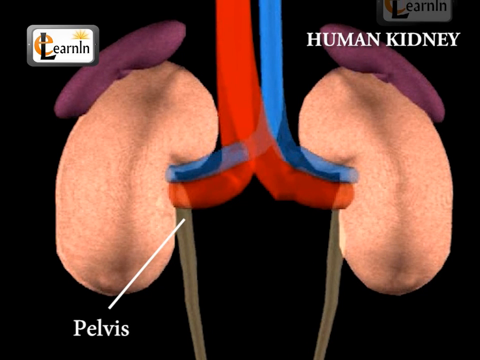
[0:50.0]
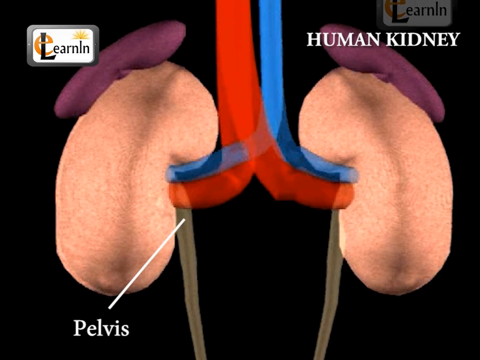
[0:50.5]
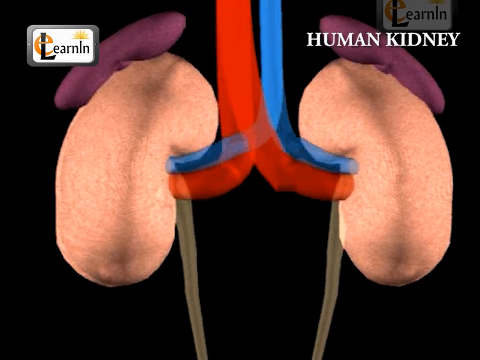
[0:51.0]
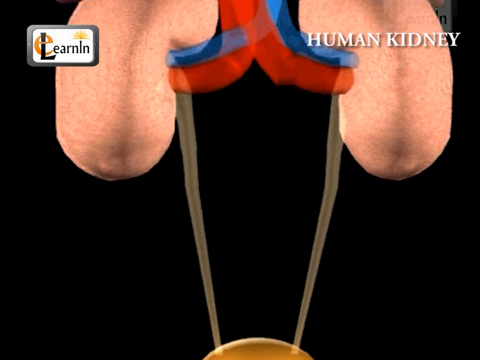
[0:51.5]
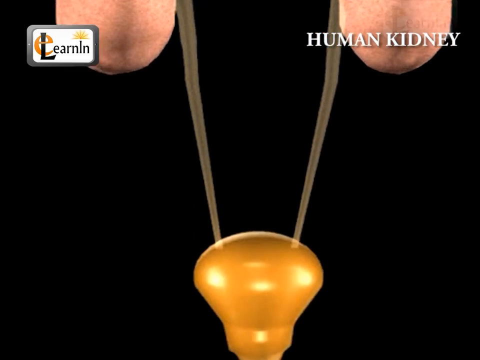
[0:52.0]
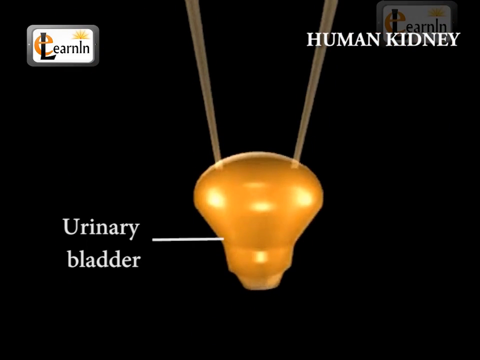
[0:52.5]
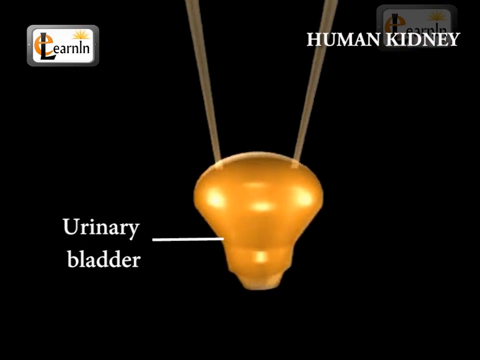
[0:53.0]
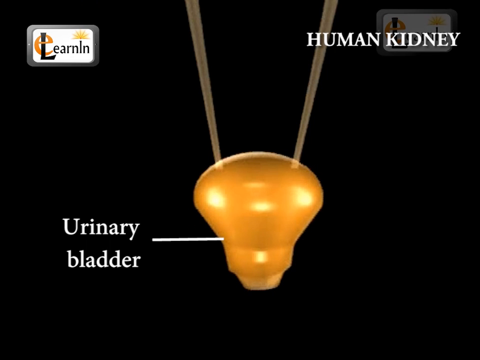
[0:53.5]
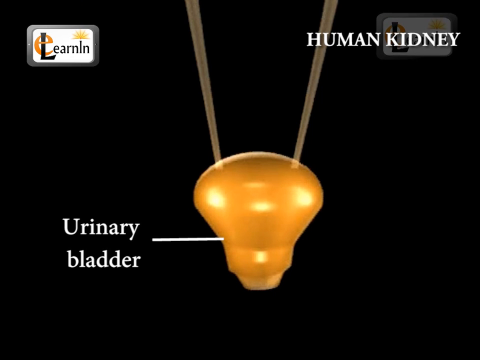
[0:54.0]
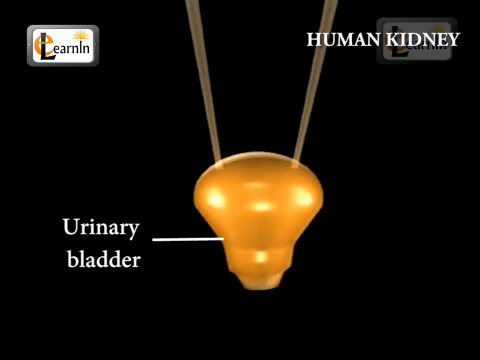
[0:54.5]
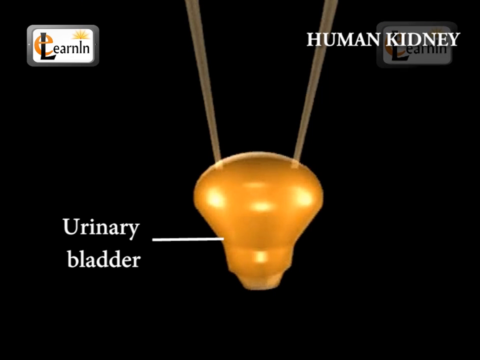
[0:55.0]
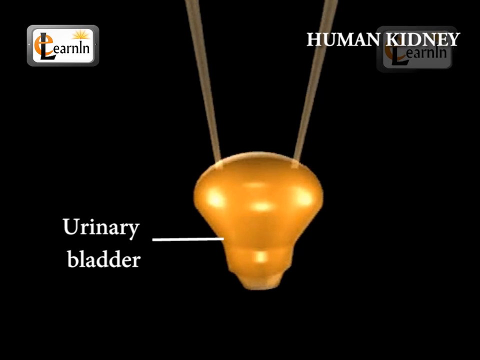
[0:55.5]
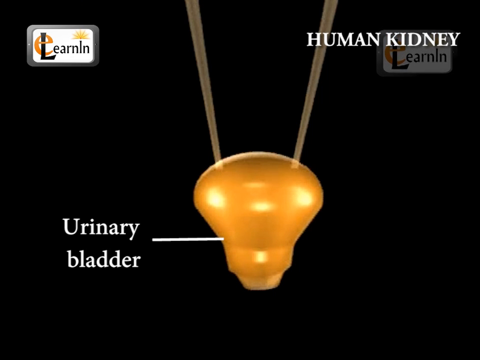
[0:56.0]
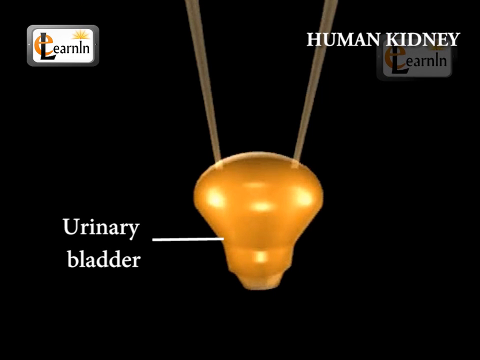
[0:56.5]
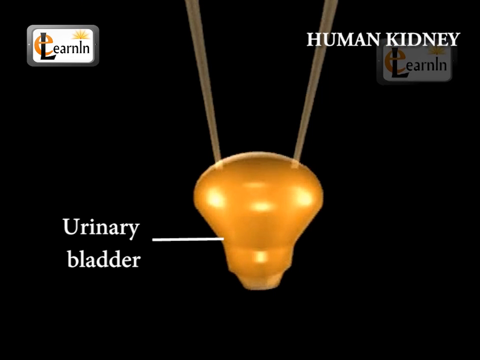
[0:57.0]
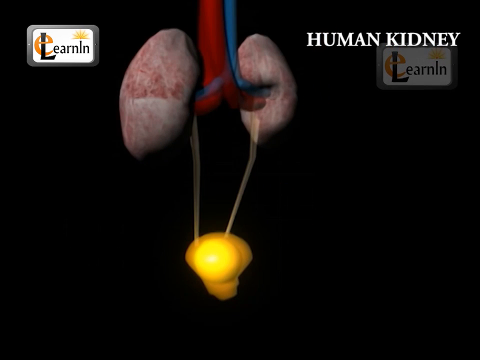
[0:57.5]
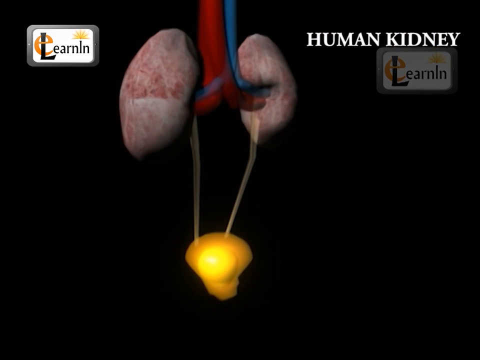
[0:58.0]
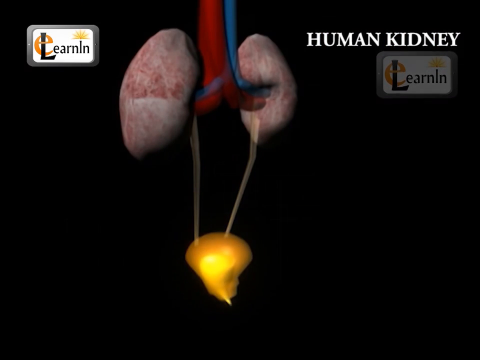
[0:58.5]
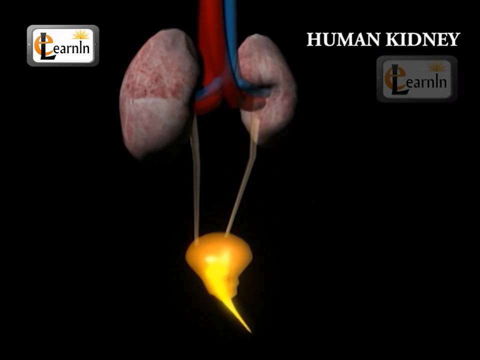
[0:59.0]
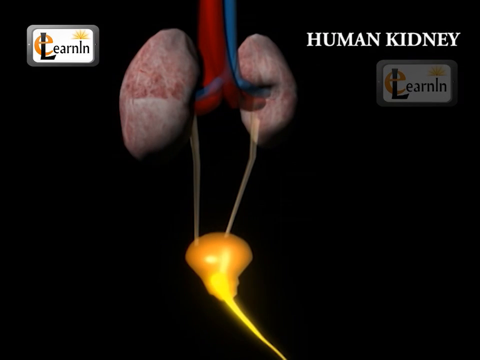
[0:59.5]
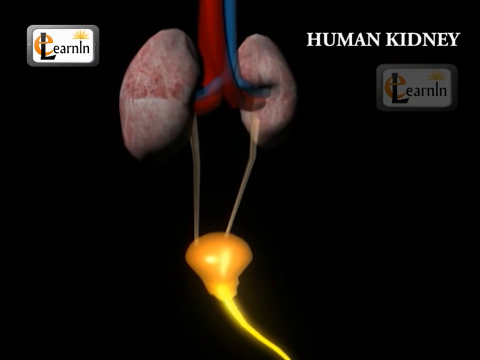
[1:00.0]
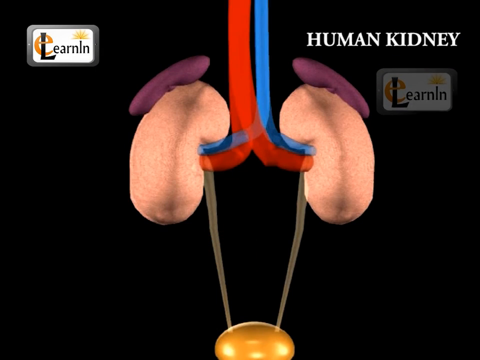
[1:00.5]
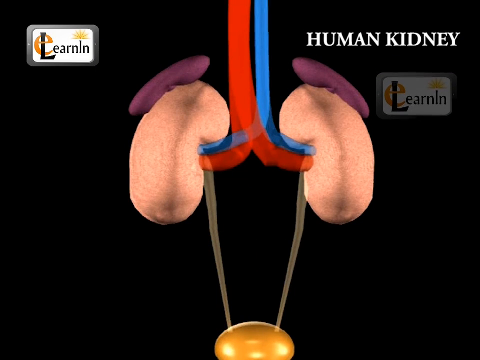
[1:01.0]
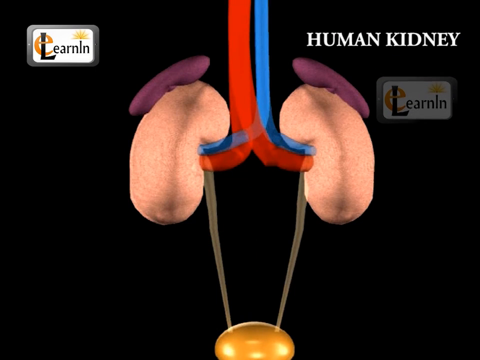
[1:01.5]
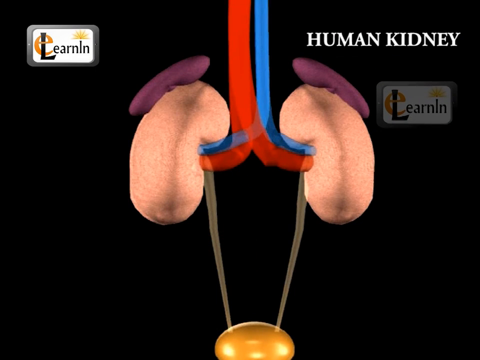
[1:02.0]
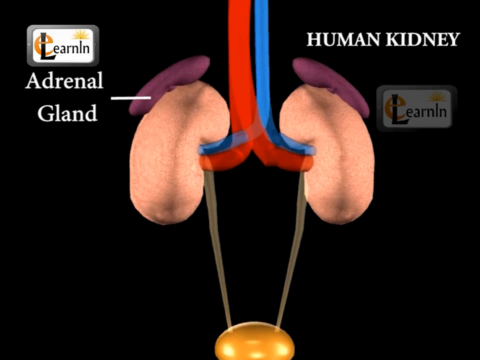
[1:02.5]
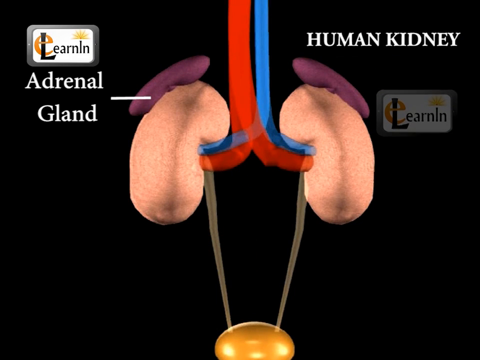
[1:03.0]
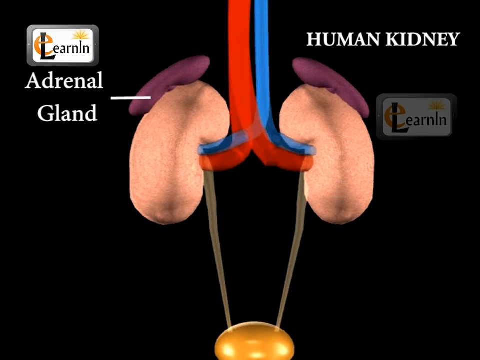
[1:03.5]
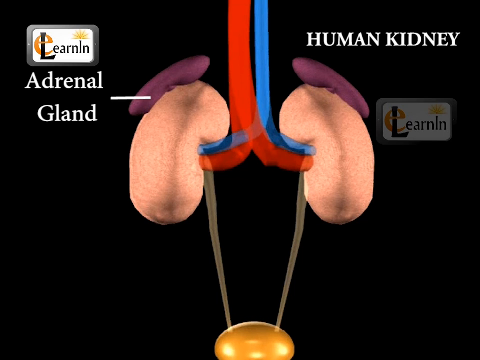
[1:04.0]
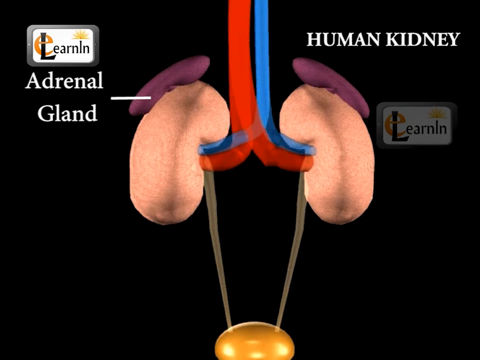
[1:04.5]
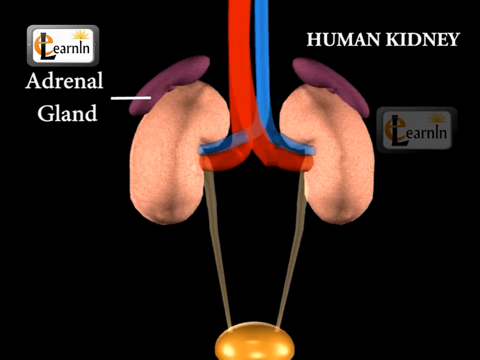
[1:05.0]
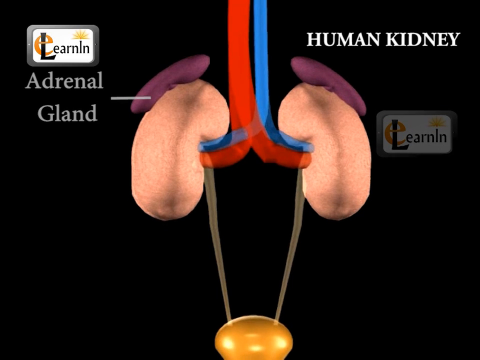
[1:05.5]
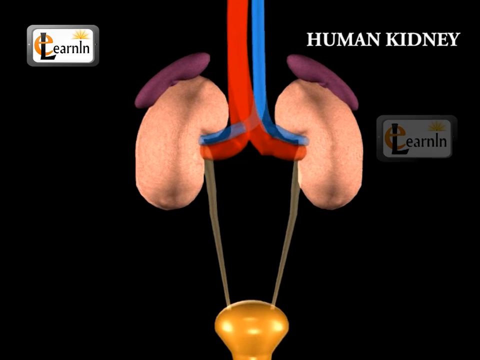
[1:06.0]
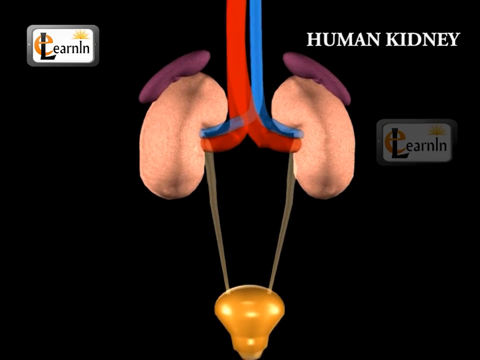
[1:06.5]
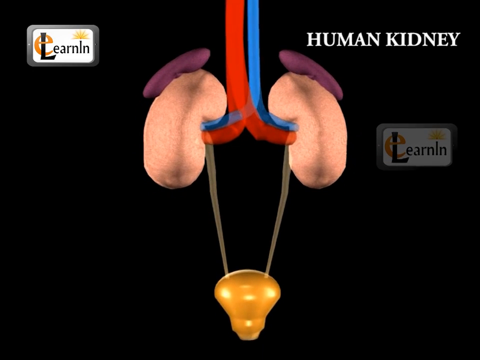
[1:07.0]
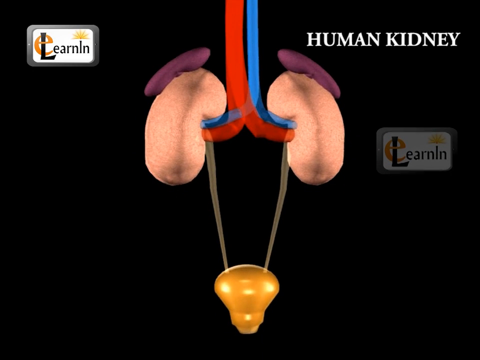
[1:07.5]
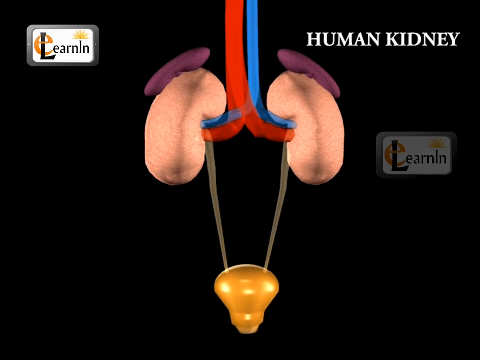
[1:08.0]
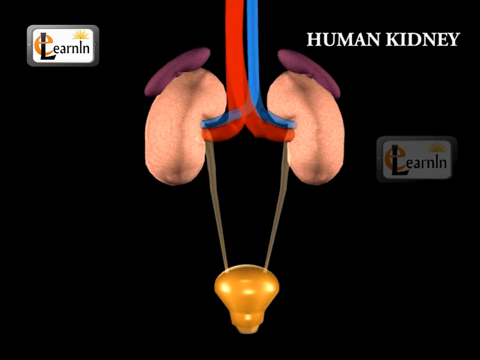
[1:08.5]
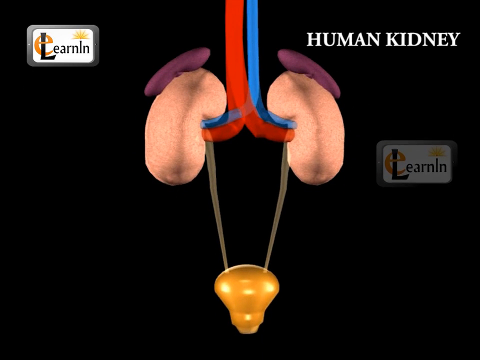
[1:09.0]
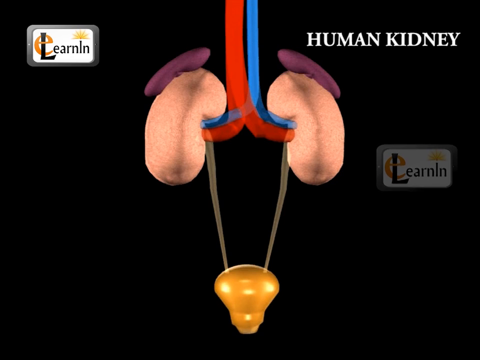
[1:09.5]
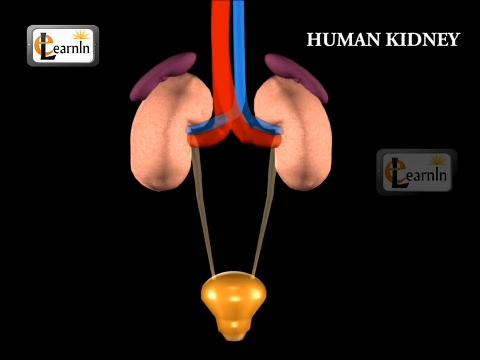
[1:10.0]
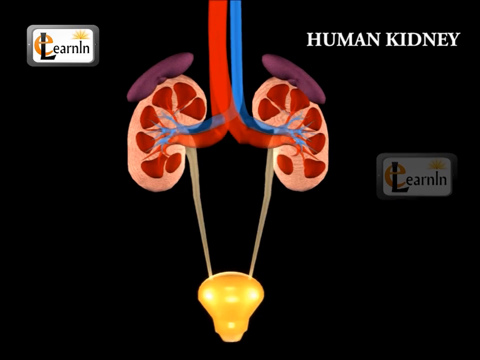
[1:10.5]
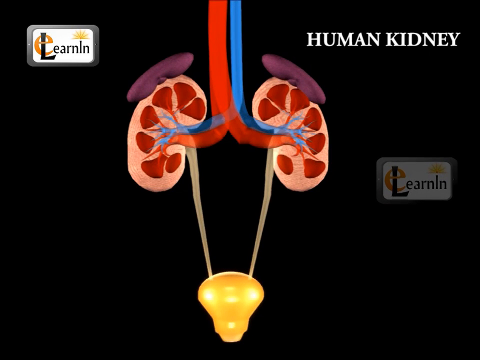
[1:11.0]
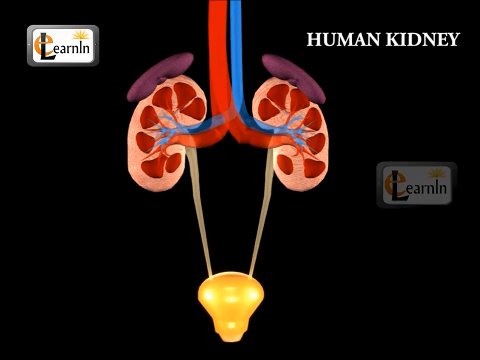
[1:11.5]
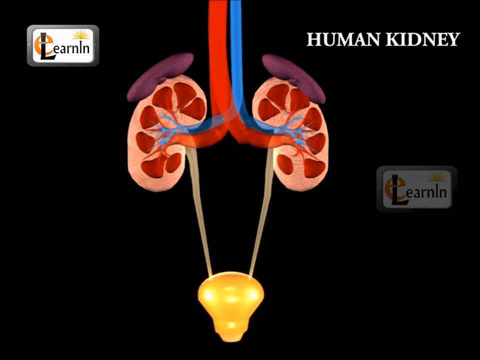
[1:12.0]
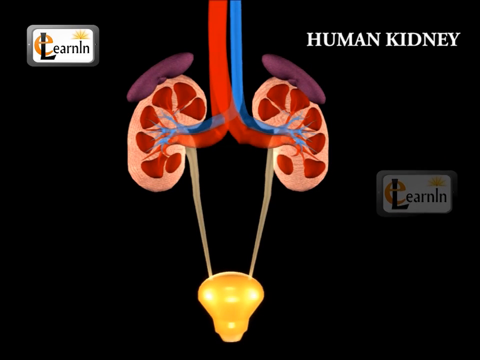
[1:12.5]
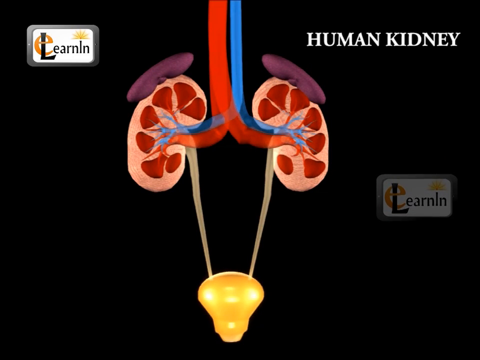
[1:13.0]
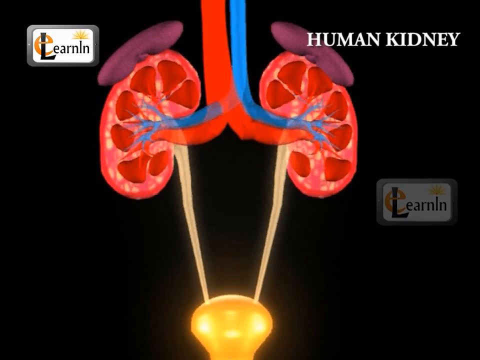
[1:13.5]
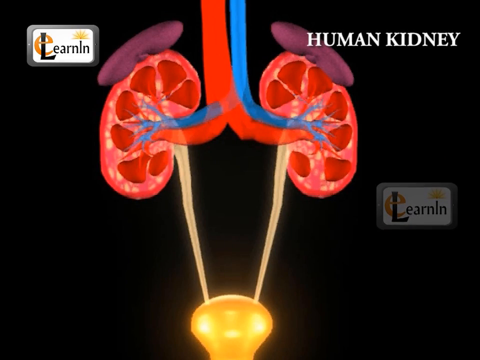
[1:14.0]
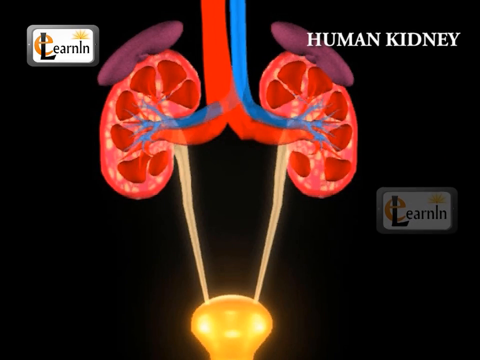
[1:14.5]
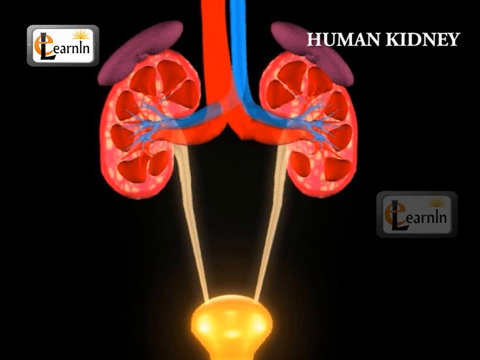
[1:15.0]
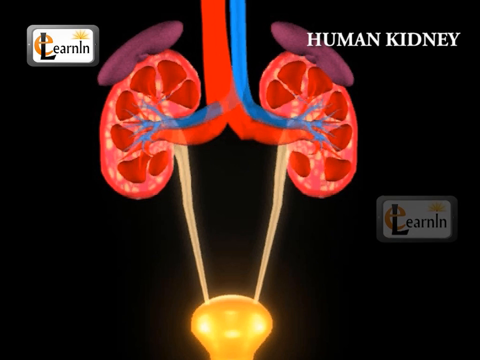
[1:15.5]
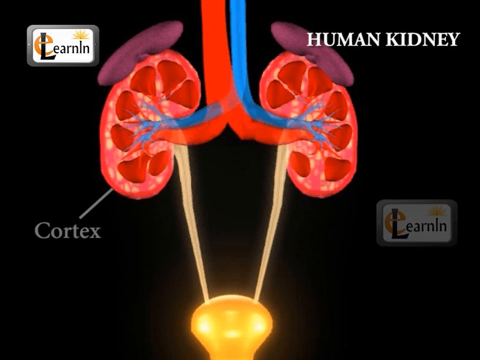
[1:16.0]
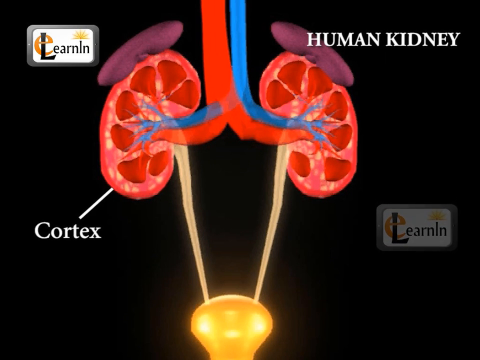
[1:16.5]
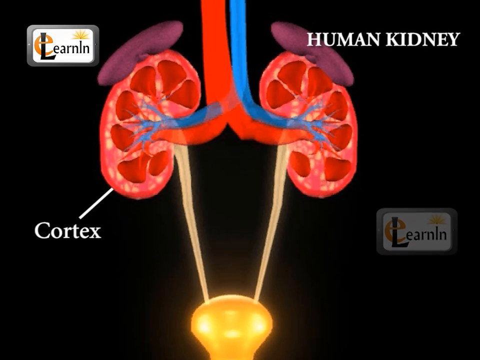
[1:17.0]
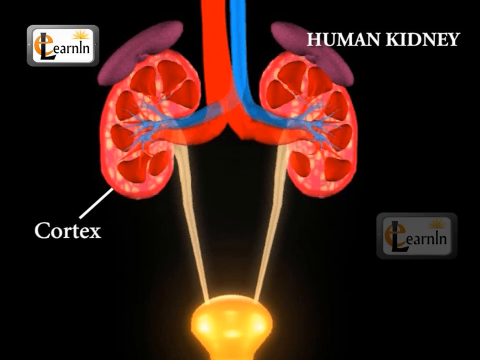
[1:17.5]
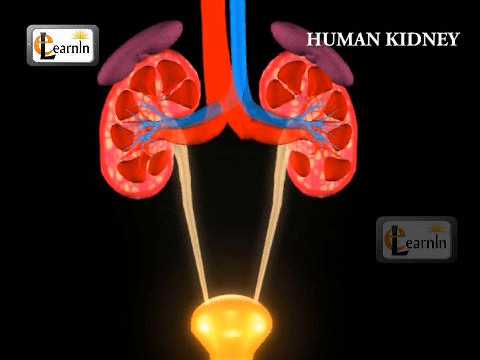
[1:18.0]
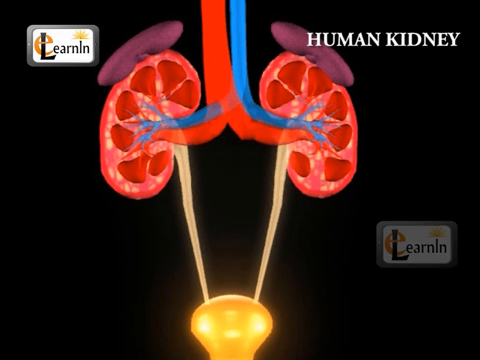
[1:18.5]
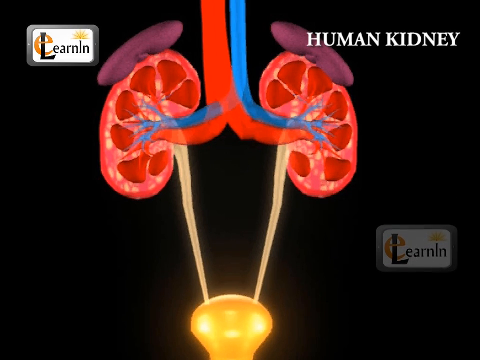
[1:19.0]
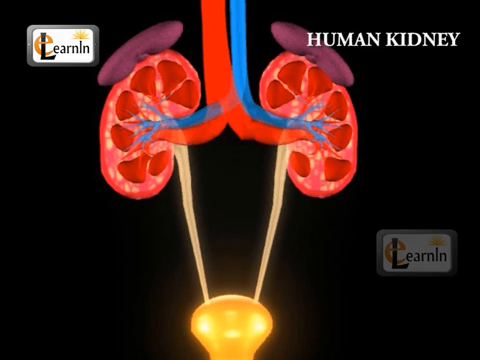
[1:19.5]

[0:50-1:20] A three-dimensional representation of the renal apparatus is shown. In the first seconds, the camera goes down toward the lower part of the three-dimensional structure, and white writing on the black background appears at the bottom left of the frame. A rather short and thin white segment connects this writing to a yellow three-dimensional structure that resembles the shape of a lamp. The two kidneys are then shown with white writing that appears for a few seconds in the upper left corner of the screen. The camera moves away slightly to show red structures inside the kidneys. After a few moments the color of the kidneys changes and they take on a reddish color. Other white words then appear next to the kidneys.